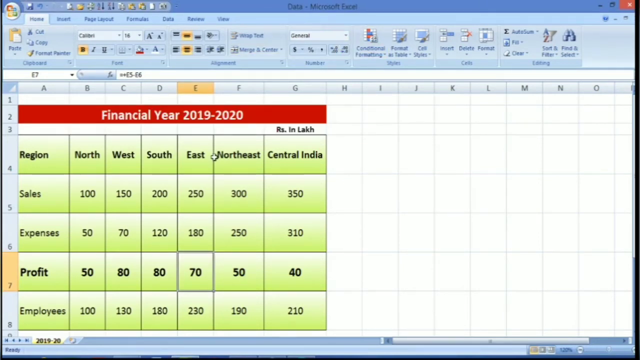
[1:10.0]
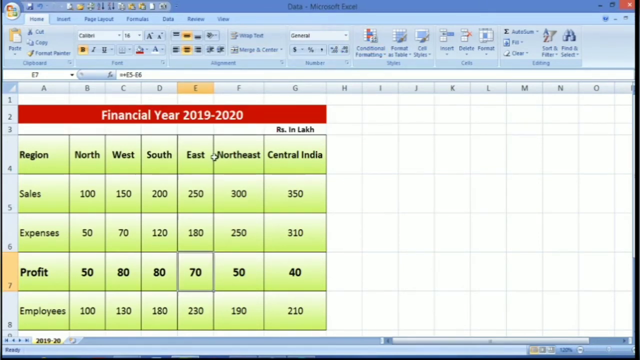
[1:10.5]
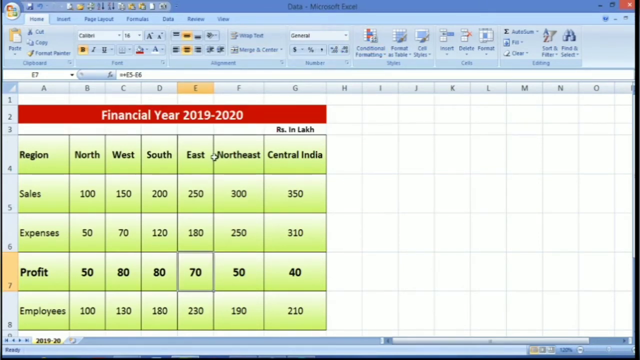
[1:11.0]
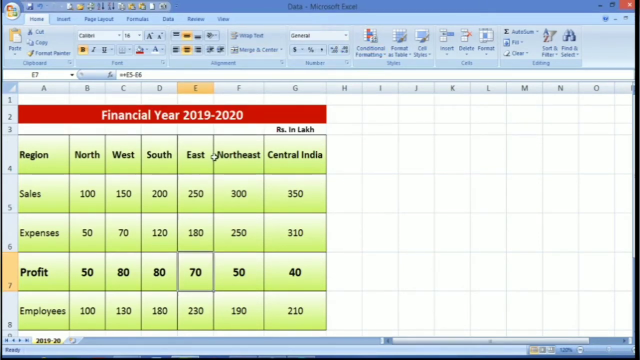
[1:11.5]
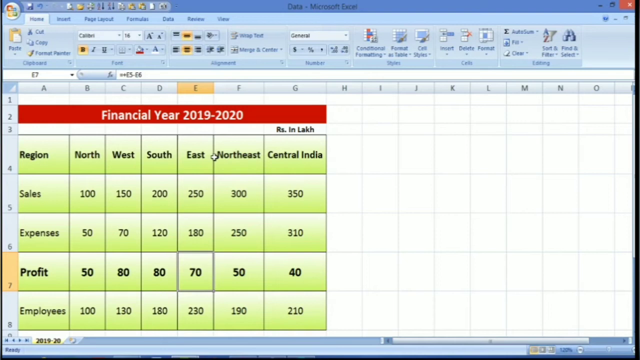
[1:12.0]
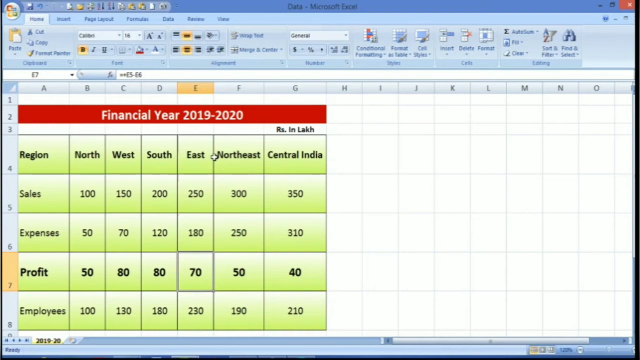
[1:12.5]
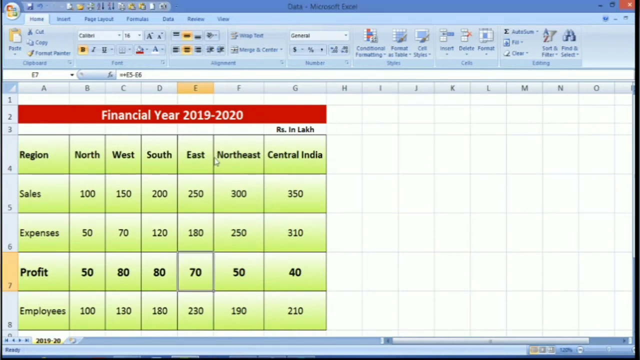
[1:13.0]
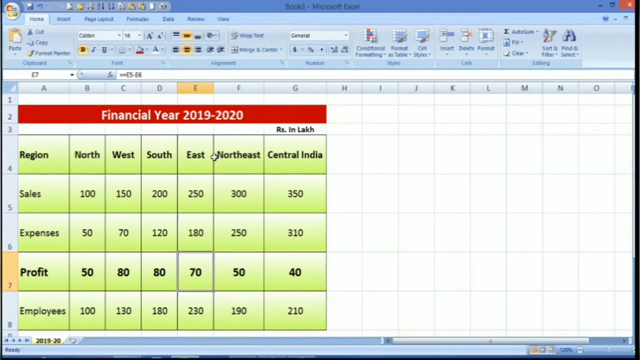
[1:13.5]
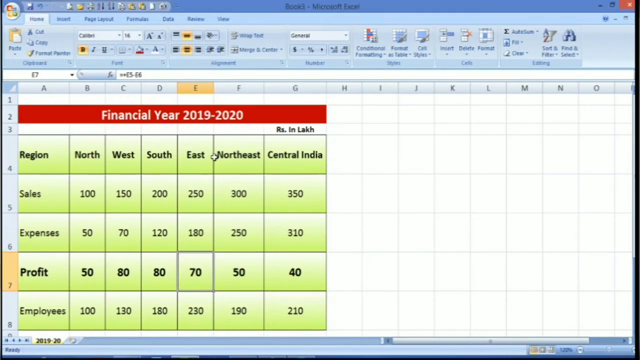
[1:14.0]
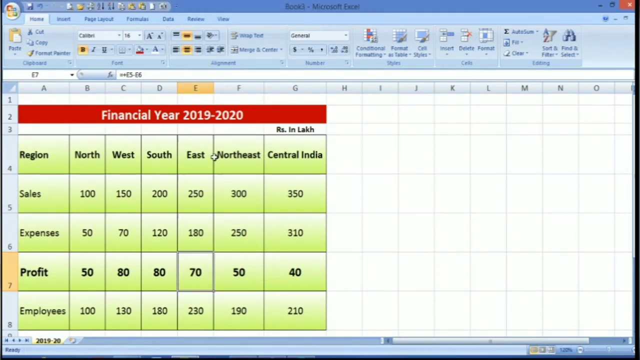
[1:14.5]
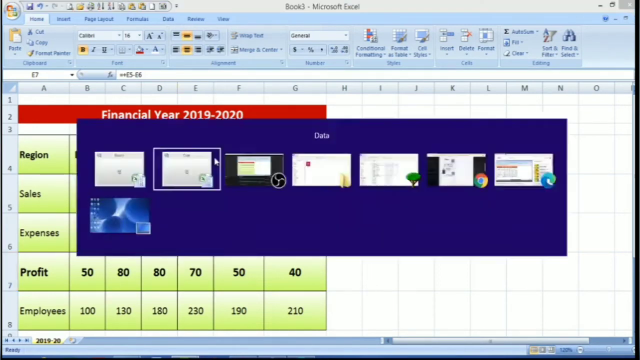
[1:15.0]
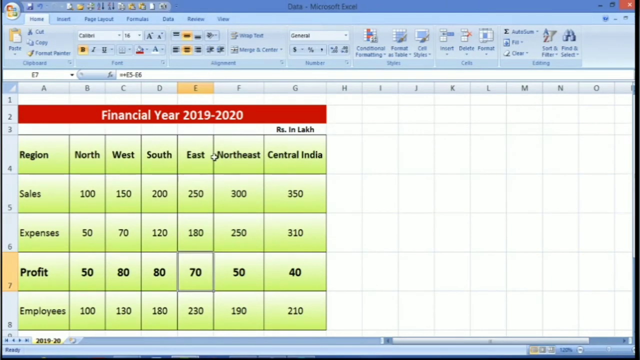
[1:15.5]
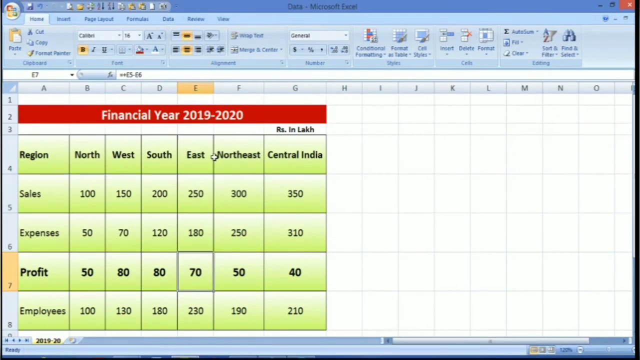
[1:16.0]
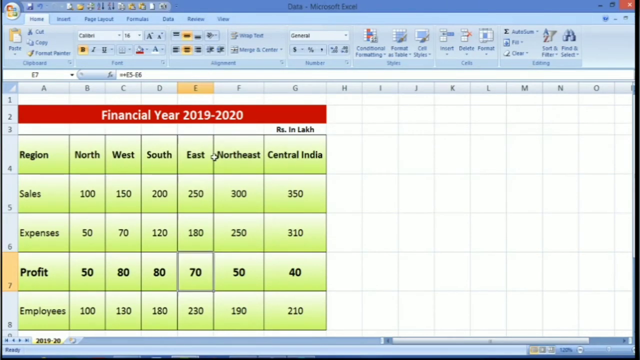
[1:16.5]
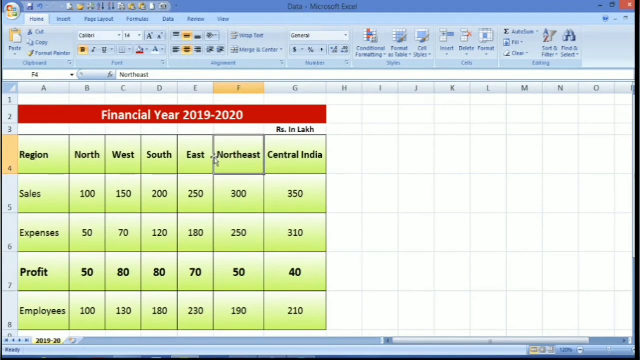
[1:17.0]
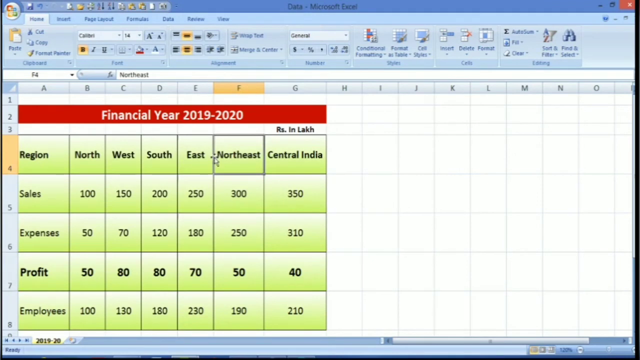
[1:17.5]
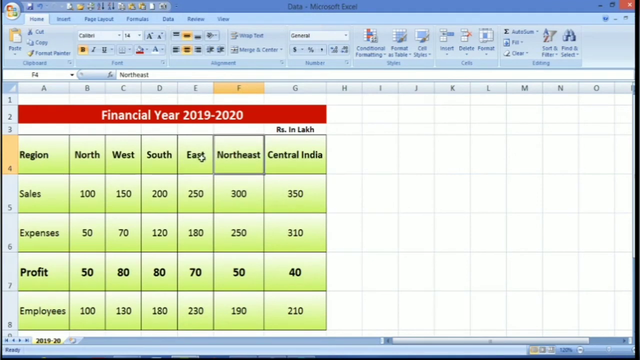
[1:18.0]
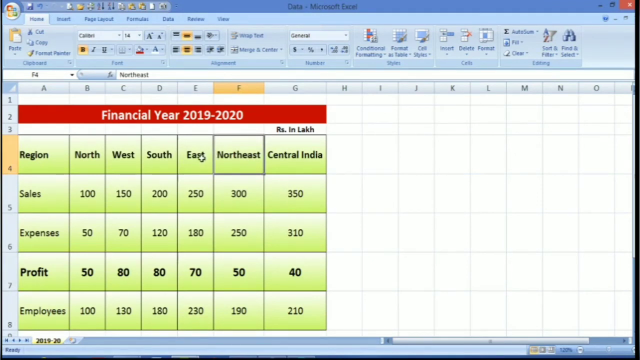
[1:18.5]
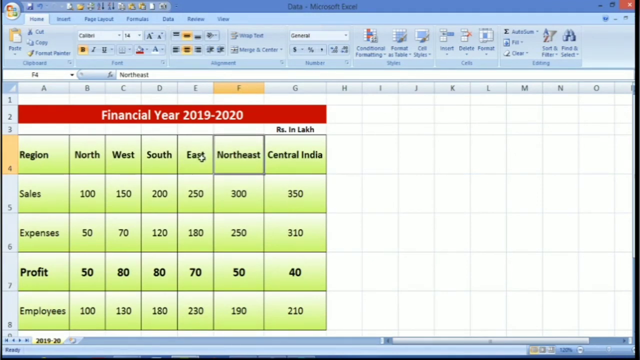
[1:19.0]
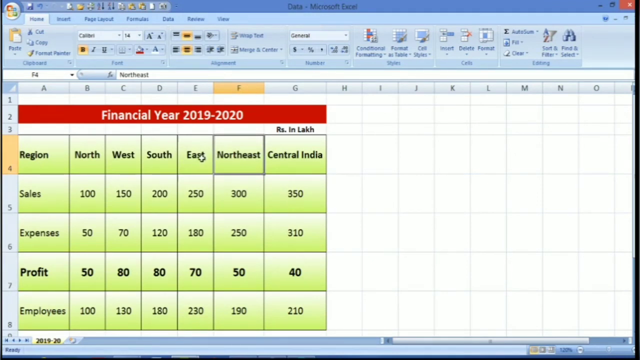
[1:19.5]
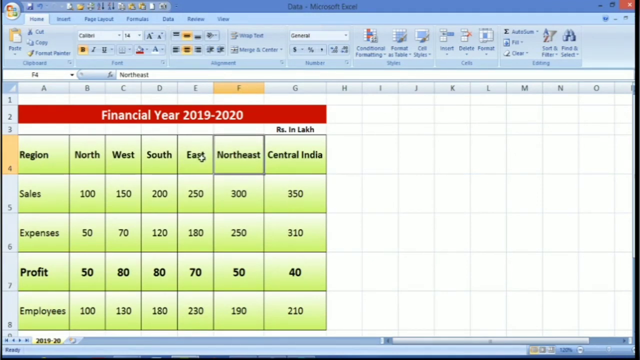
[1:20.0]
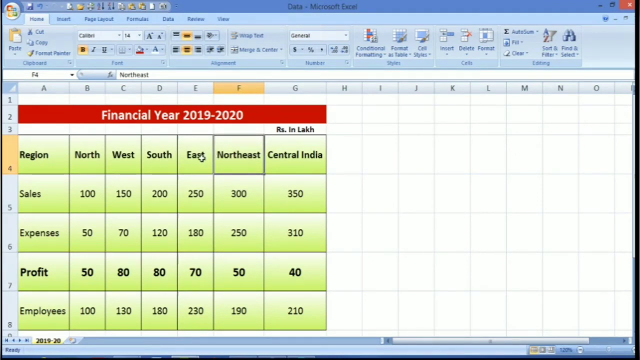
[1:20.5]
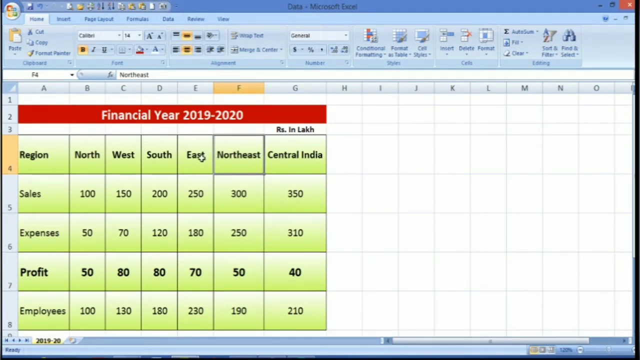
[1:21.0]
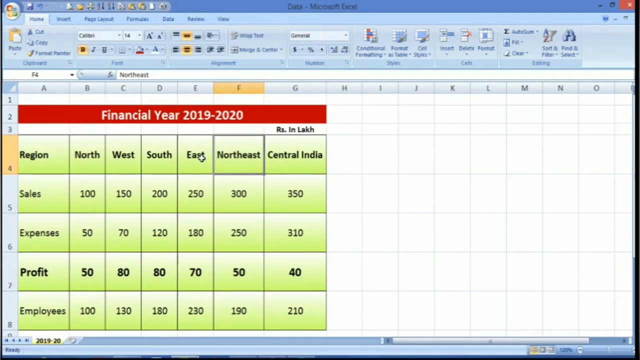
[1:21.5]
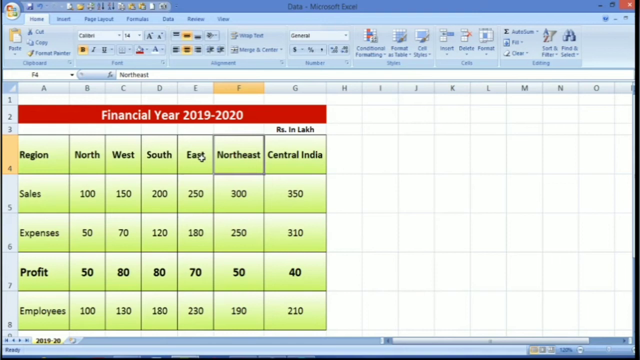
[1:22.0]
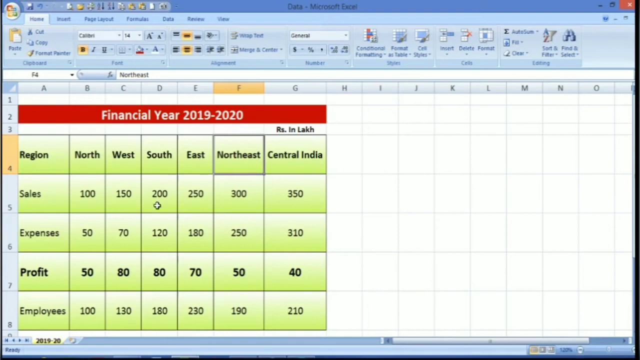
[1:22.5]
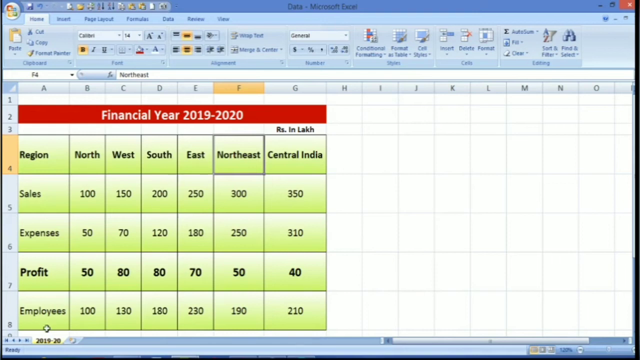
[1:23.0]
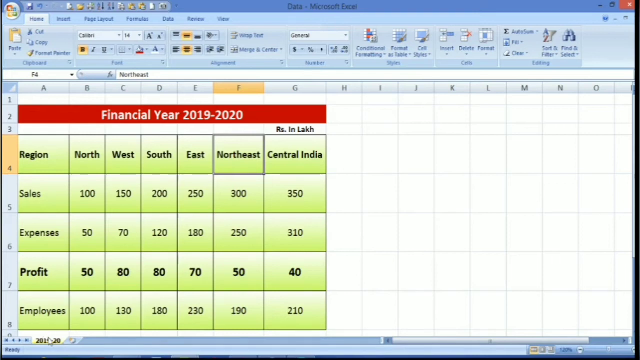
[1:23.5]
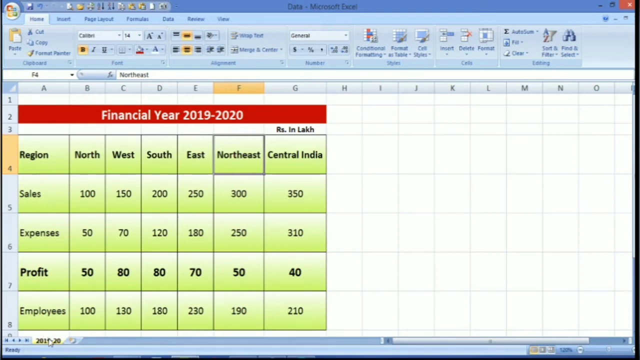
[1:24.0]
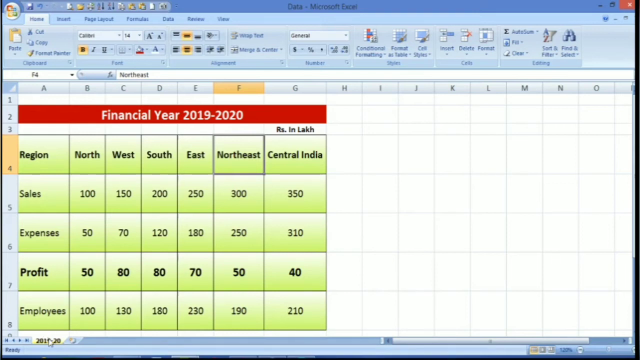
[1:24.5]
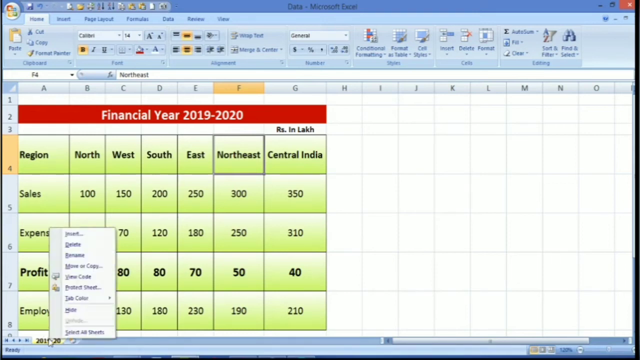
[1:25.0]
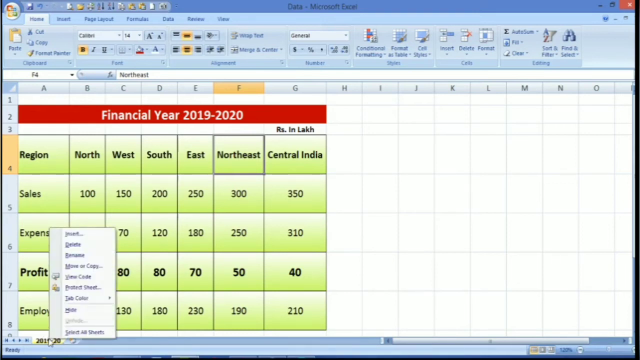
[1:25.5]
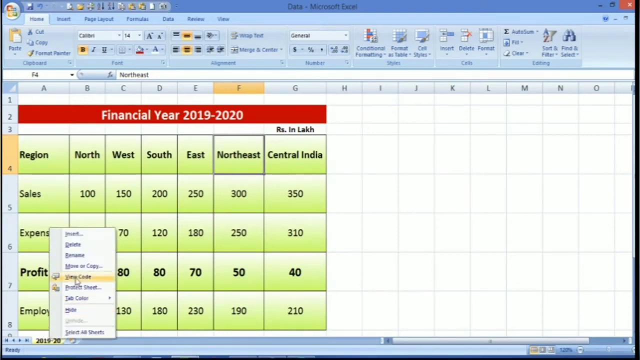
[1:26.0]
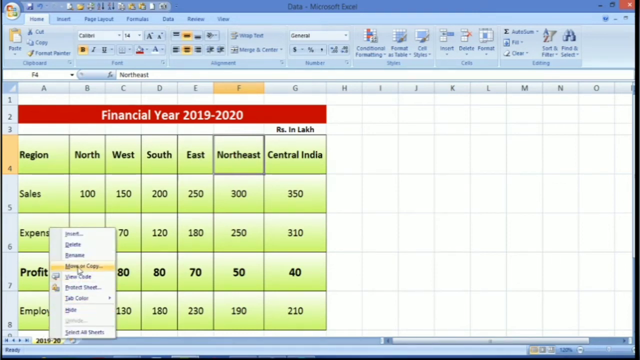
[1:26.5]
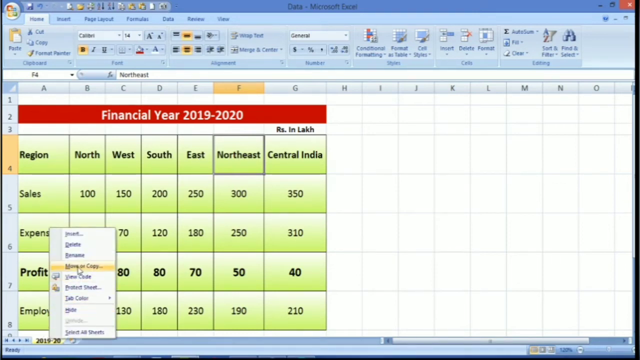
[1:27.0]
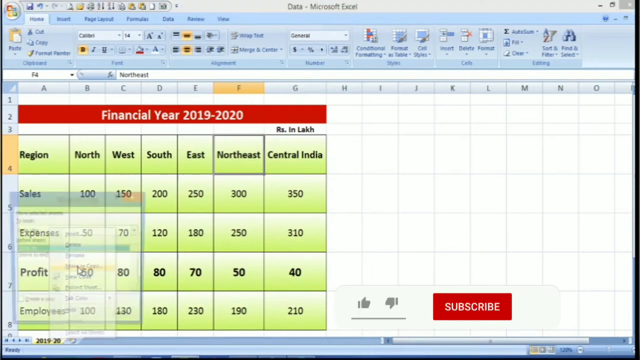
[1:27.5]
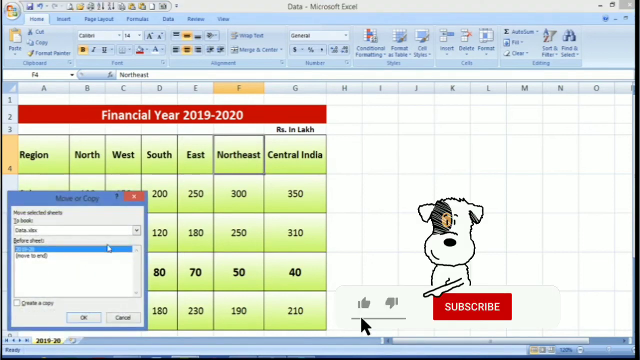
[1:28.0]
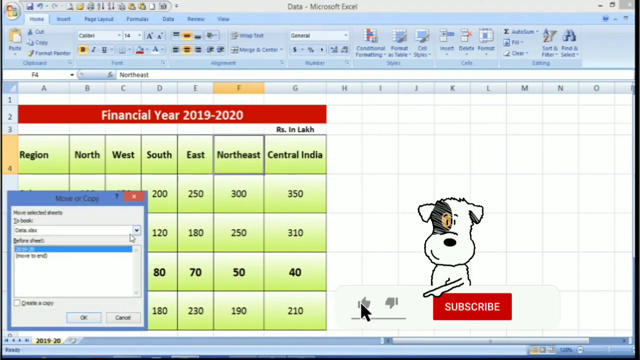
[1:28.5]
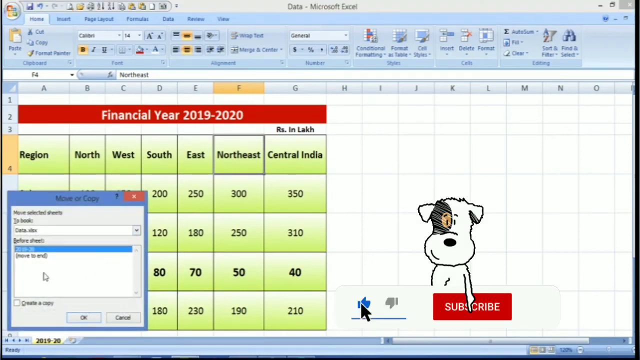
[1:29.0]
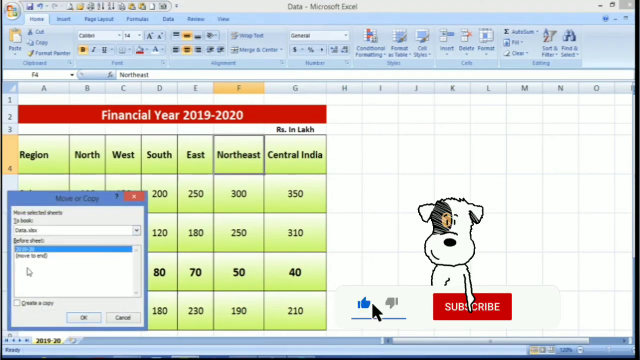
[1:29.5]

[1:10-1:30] The video is slightly wider than it is tall and shows an Excel sheet in Microsoft Office, titled "data" in the blue bar at the very top. The Home tab appears to be selected, with the matching buttons and options below. In the main work area, the title "financial year 2019 to 2020" is written in white text on a red background. Below it is a chart with columns labeled region, north, west, south, east, northeast and central India, and rows sales, expenses and profit, filled in with various numbers. Between the title bar and the column names is text reading "rs.in" and "lakh". The cursor moves to the lower left corner and right-clicks the sheet tab, bringing up a move or copy window, with the second option in that window selected. The cursor then moves out of the window.